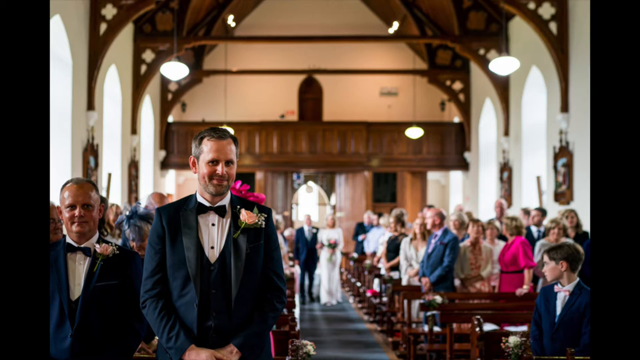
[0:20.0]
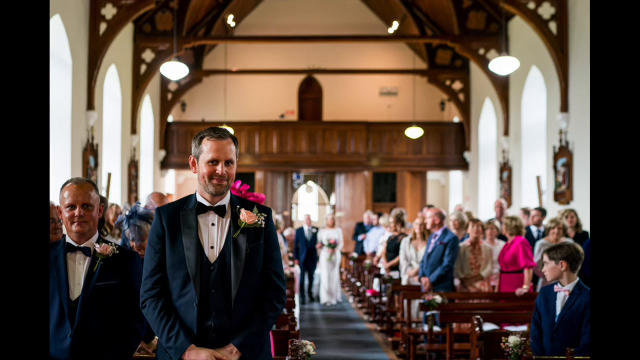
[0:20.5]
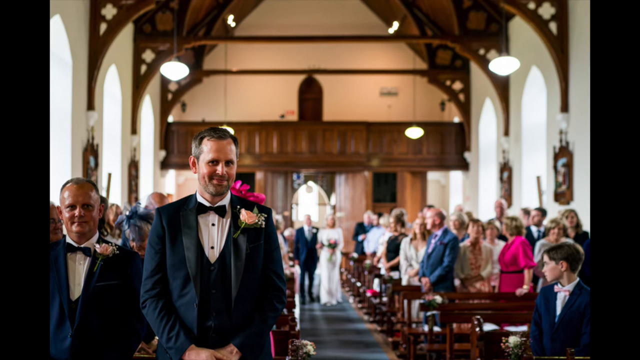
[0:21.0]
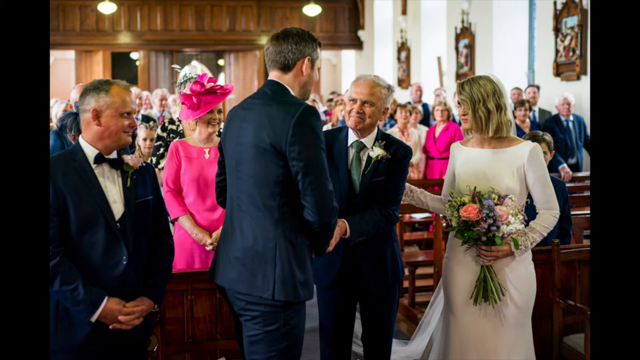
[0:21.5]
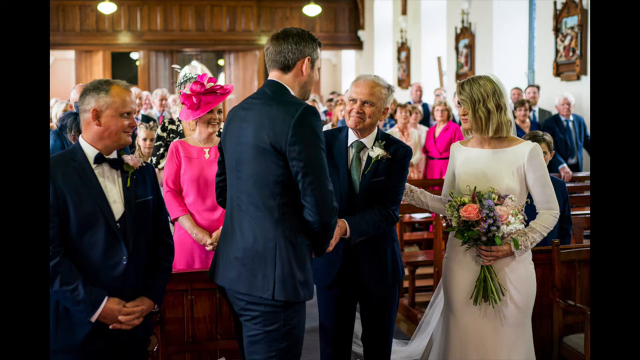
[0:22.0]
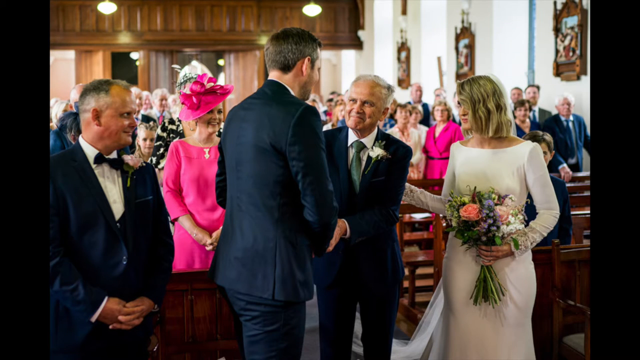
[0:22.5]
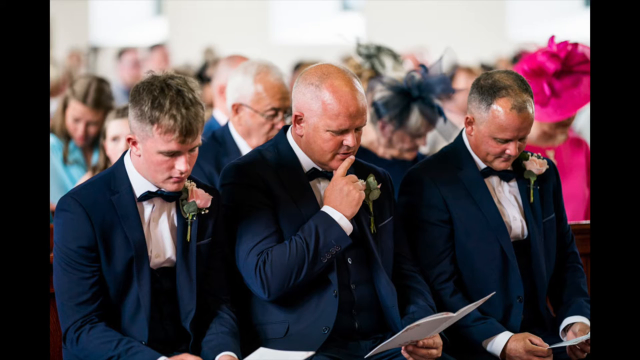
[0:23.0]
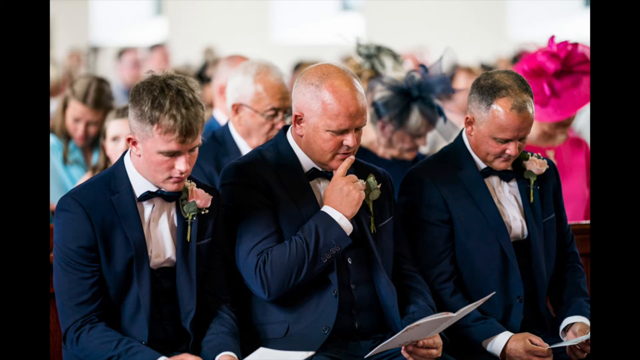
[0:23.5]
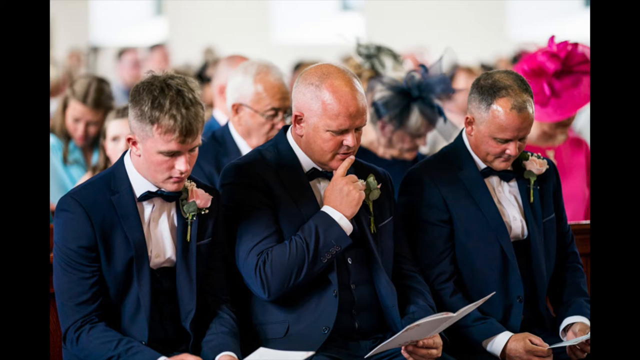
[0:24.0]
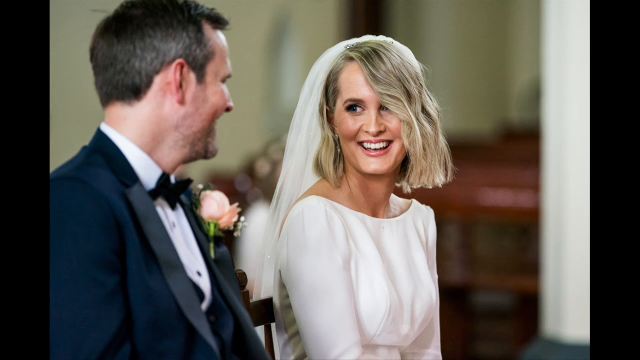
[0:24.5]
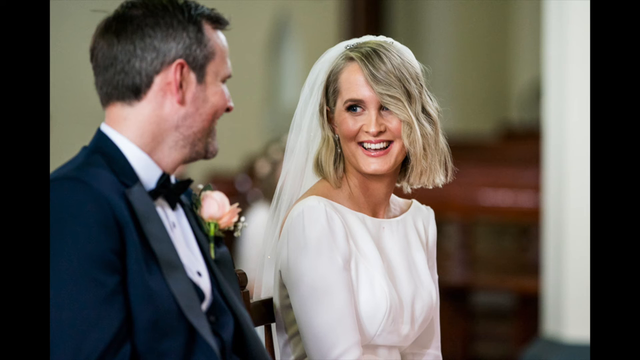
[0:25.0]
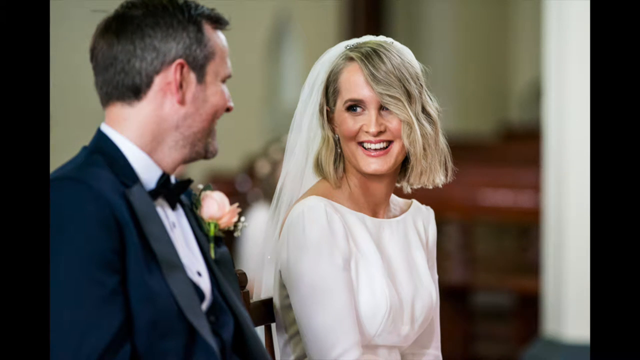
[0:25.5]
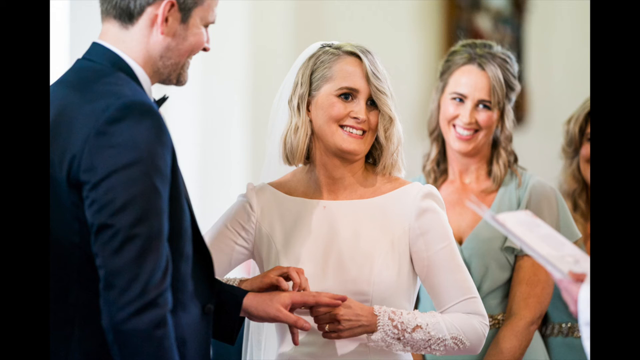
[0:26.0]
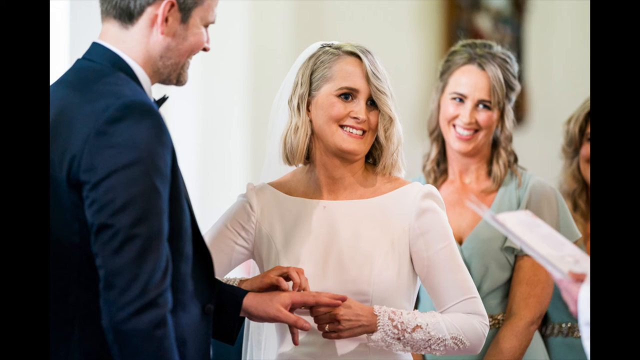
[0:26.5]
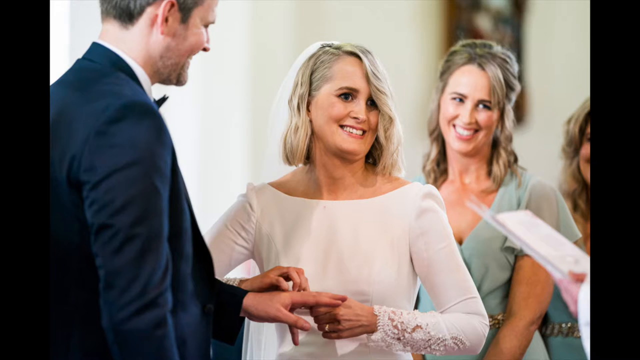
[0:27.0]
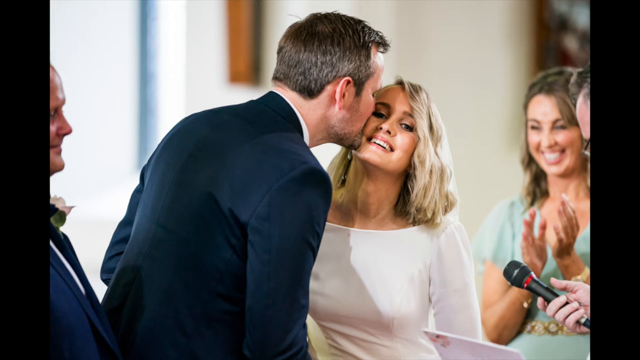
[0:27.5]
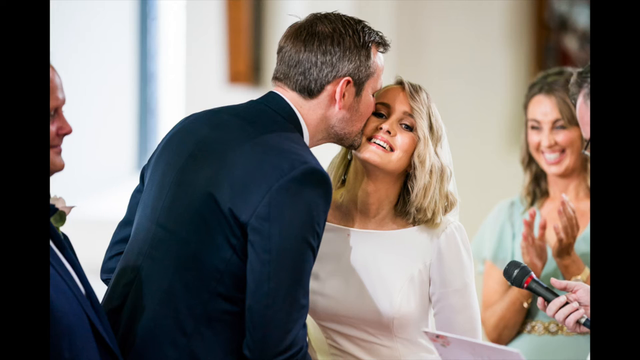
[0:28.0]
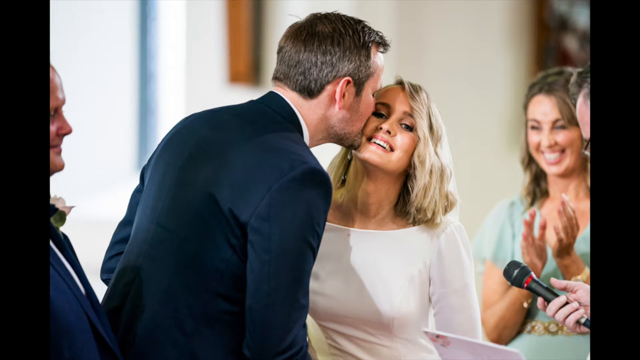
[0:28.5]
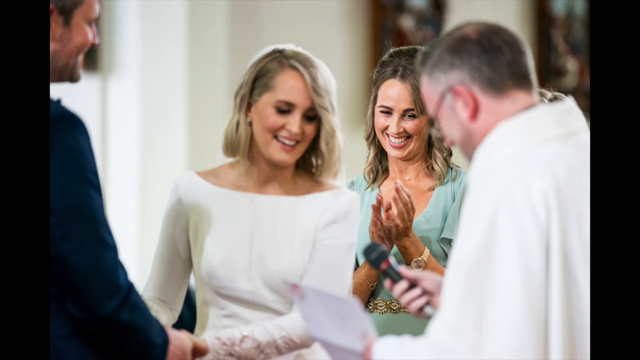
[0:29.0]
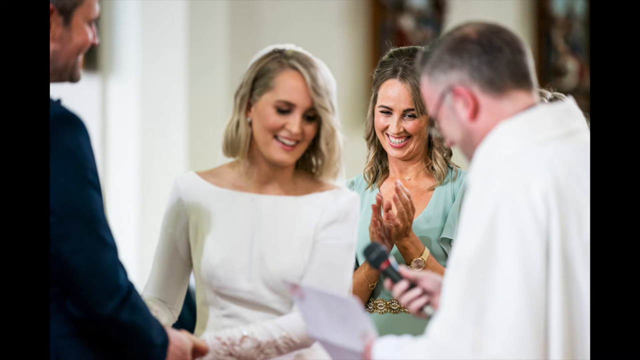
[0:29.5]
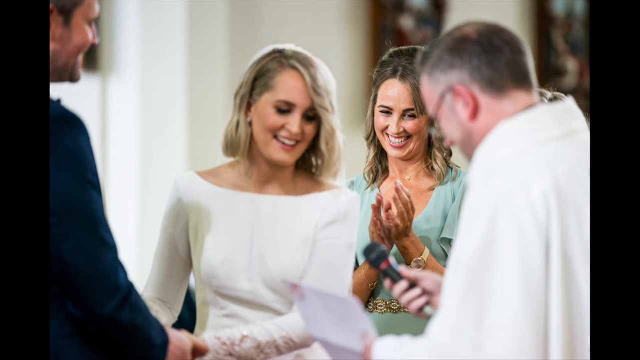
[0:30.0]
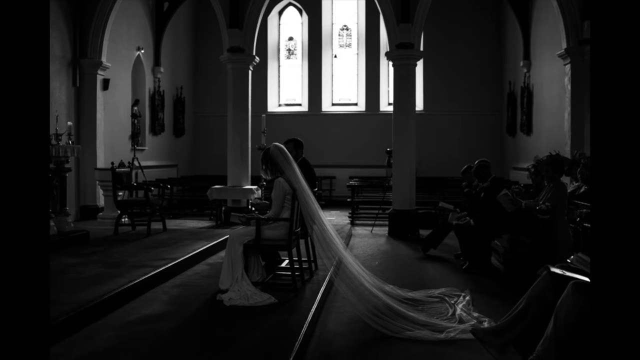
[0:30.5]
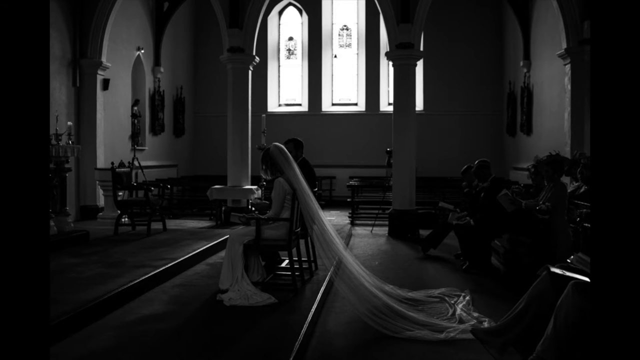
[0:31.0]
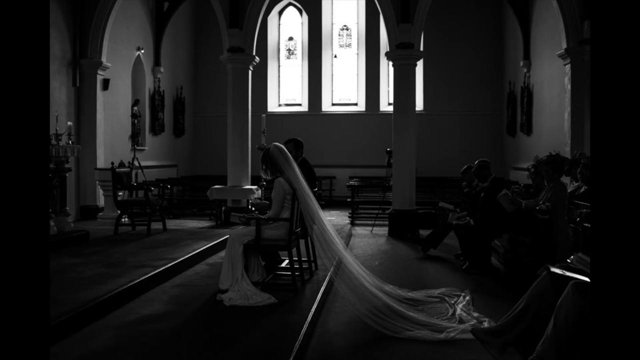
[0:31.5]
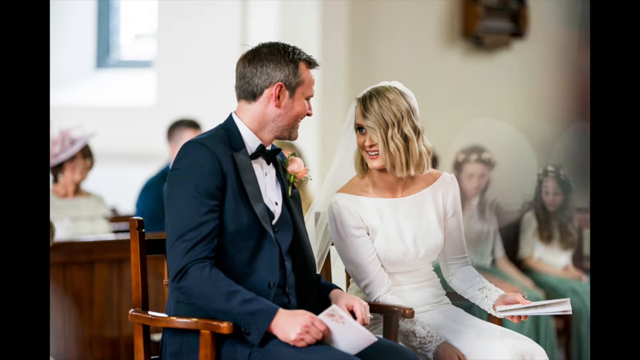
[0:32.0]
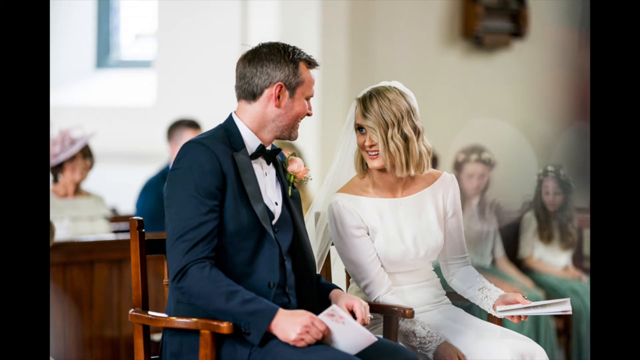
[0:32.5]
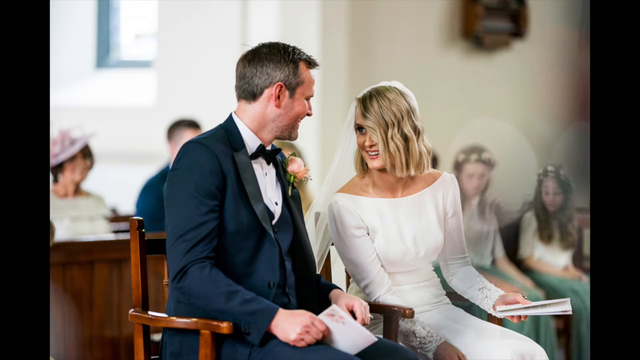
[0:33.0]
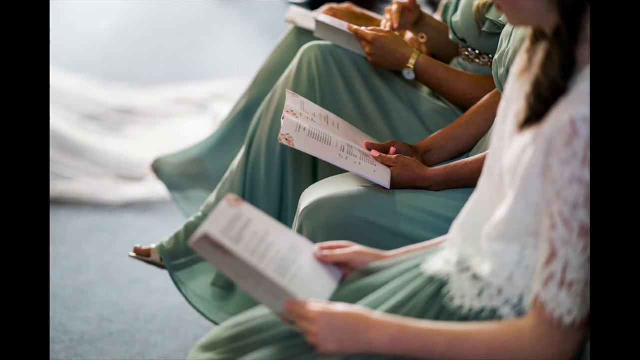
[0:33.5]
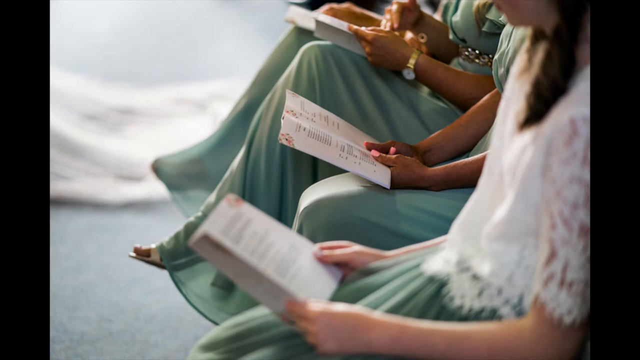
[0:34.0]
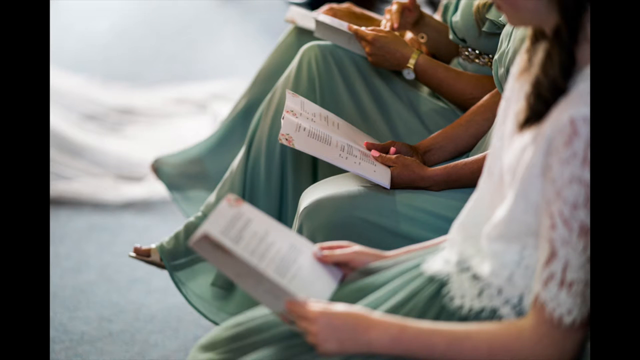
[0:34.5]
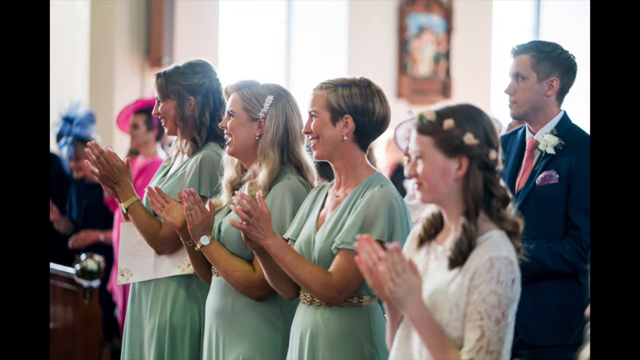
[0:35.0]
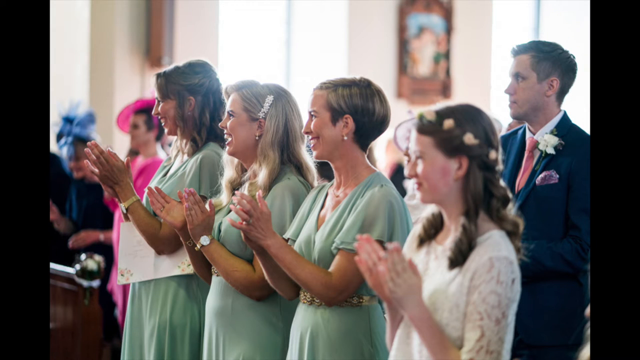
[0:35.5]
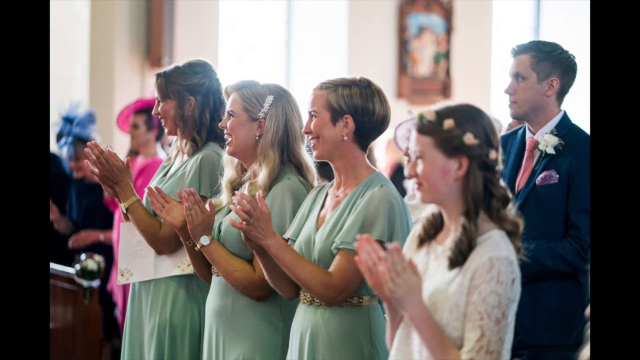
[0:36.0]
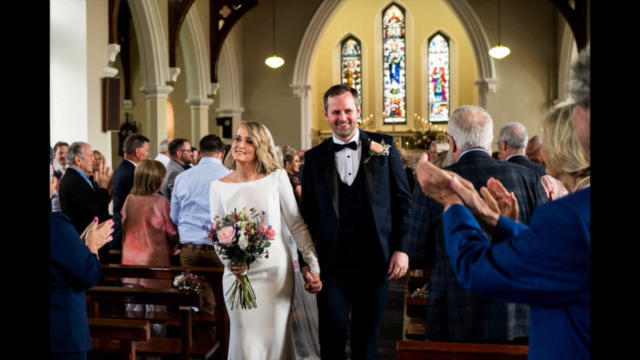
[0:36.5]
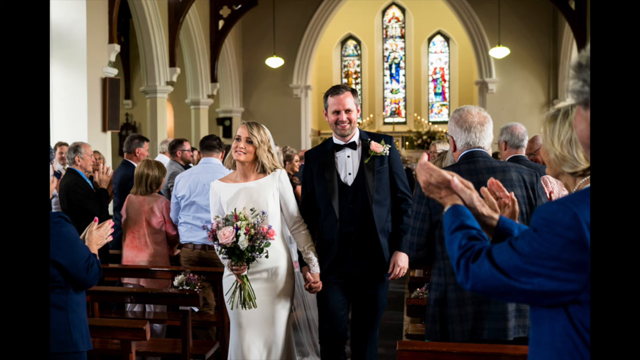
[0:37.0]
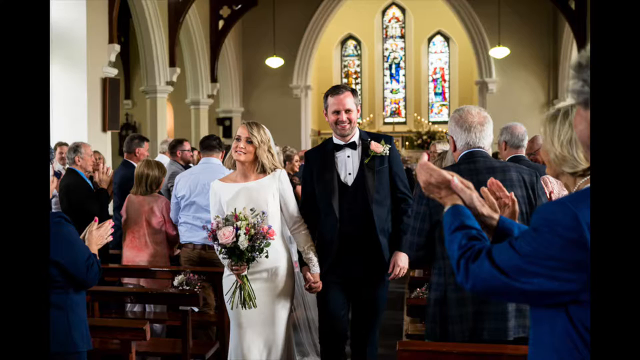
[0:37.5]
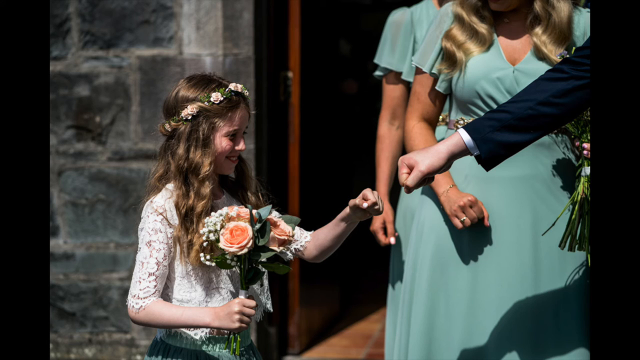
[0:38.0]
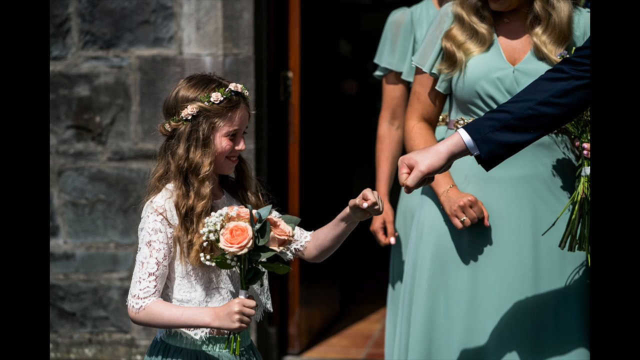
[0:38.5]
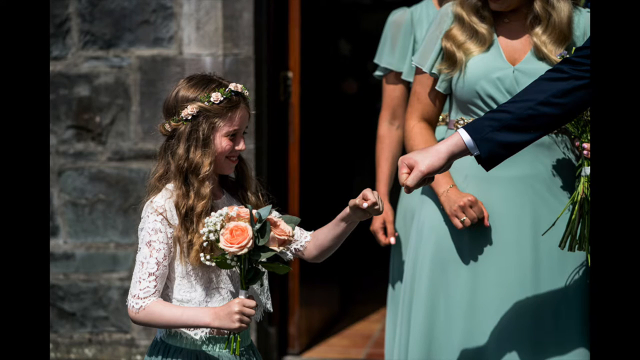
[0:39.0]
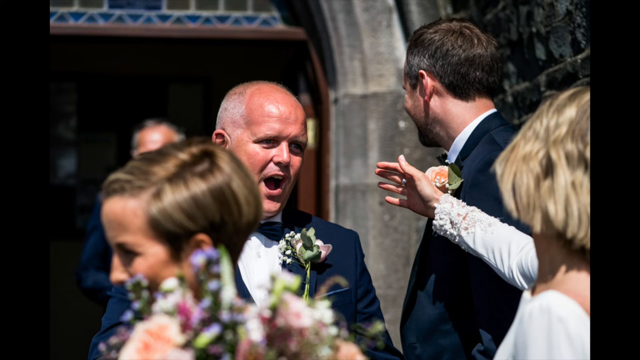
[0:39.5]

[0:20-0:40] The bride's father shakes hands with the groom as the bride waits for them to switch places. The fathers sit down reading the program. The bride and groom look at each other; her hair is parted on one side with the veil draped over the back of her hair, and she puts the ring on. He kisses her cheek, and the bridesmaids clap and cheer. The priest approaches with a microphone. A black-and-white photo from the side shows the bride and groom sitting down, with her very long train, probably about three feet long. Columns are visible, and the side of the room has three arched window panes that look like stained glass, with several people seated behind the couple. The video cuts back to color pictures of the bride and groom looking at each other. The bridesmaids, in white seafoam-colored dresses, sit reading a program, then all stand and clap in the church along with the flower girl. In the background, a woman wears a bright pink dress and pink hat, and the woman next to her wears a blue dress and blue hat. The bride and groom come down the aisle, the flower girl fist-bumps the groom outside, and the father approaches his daughter.